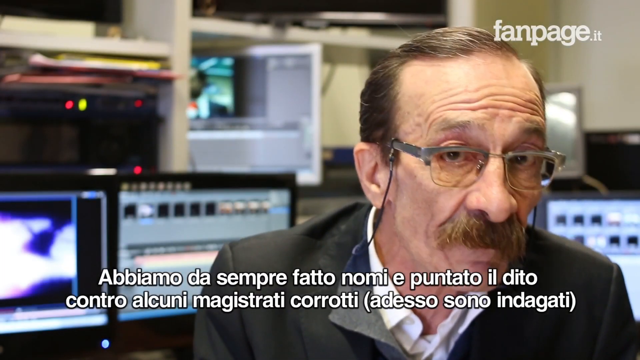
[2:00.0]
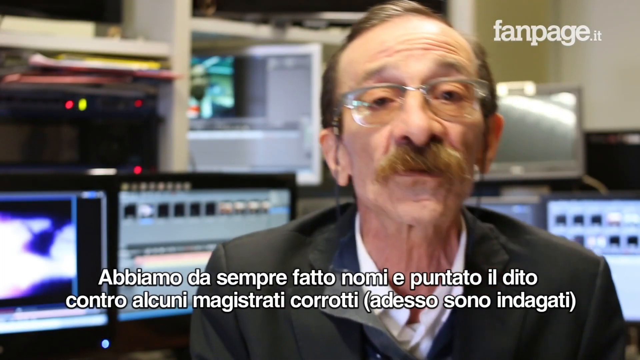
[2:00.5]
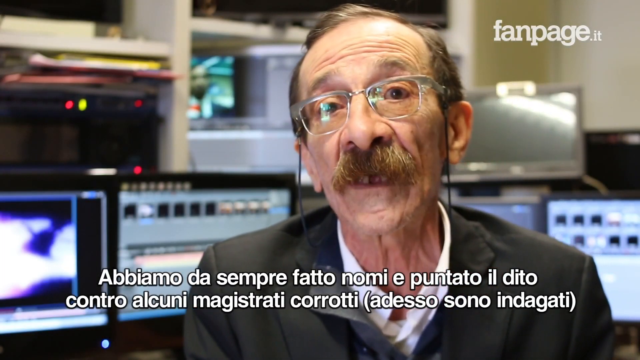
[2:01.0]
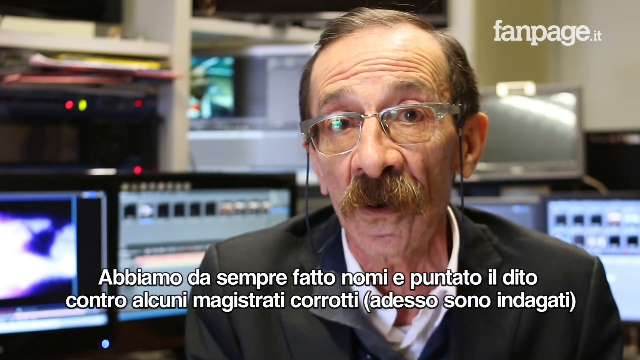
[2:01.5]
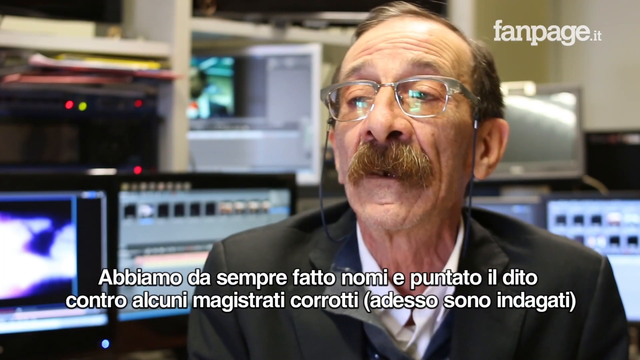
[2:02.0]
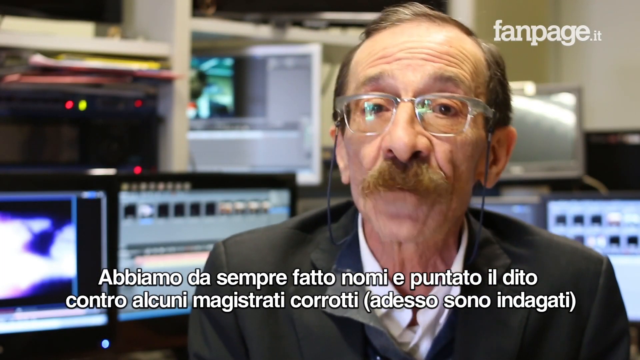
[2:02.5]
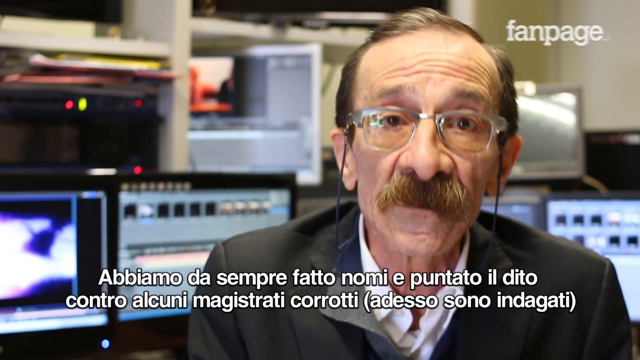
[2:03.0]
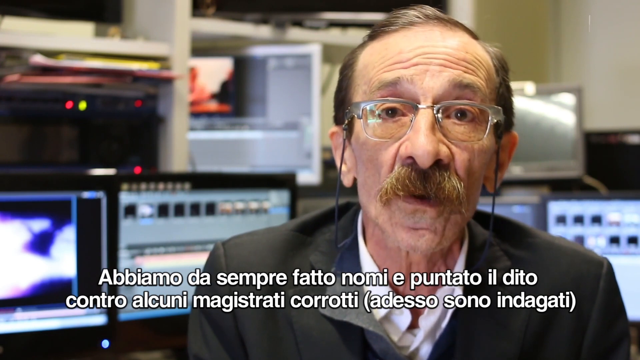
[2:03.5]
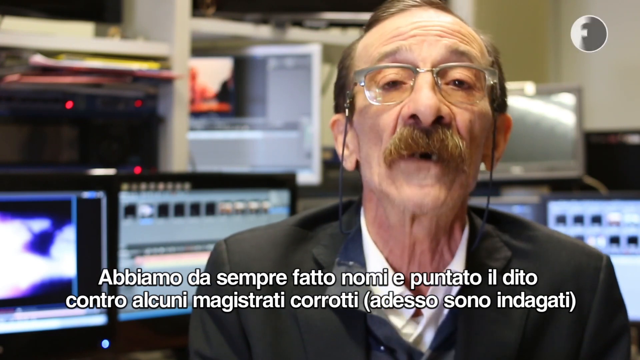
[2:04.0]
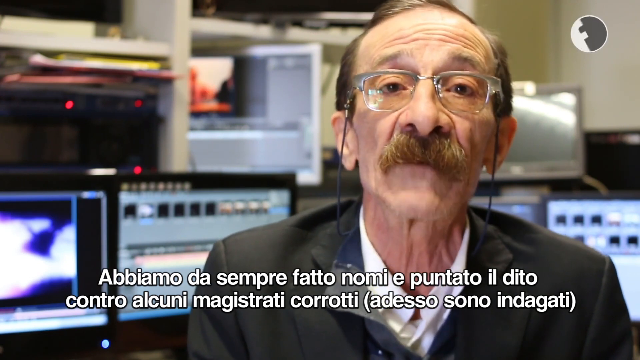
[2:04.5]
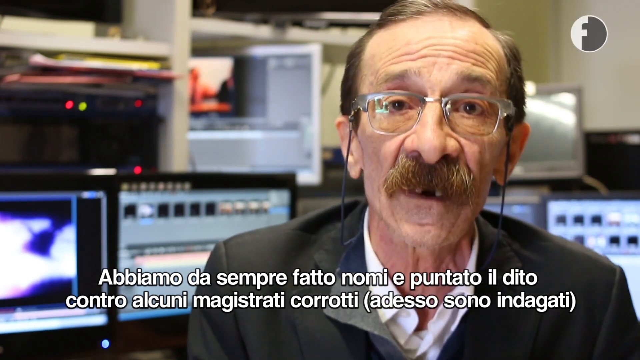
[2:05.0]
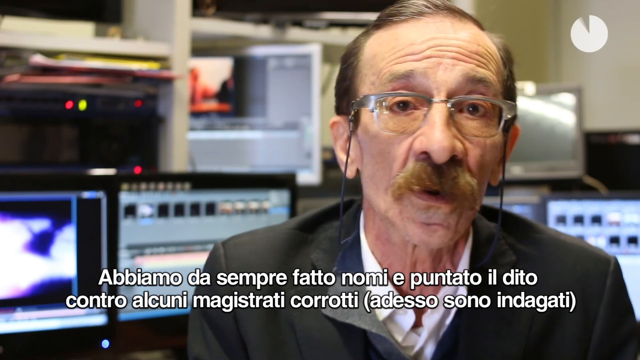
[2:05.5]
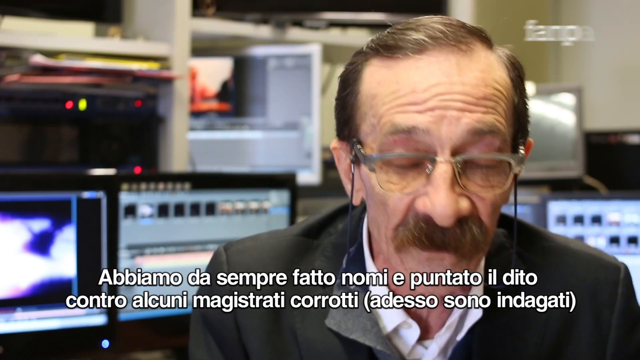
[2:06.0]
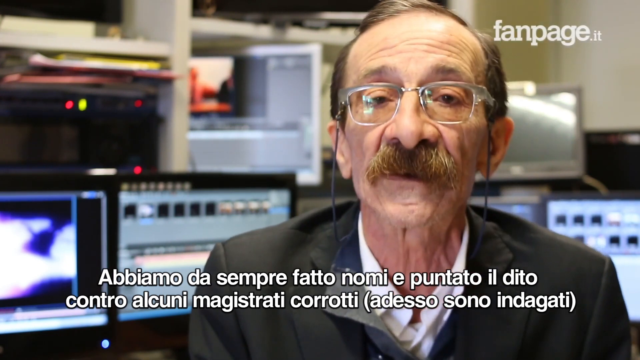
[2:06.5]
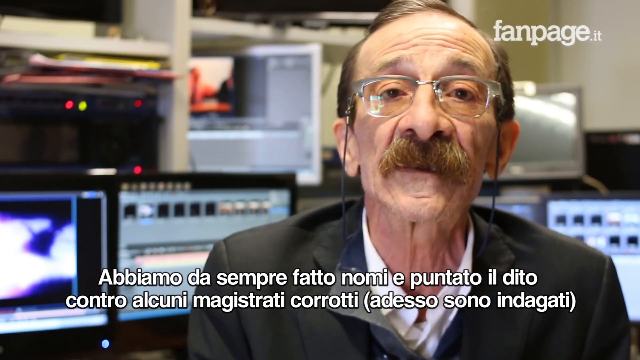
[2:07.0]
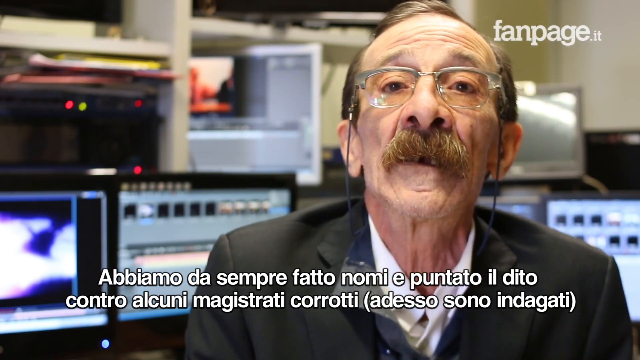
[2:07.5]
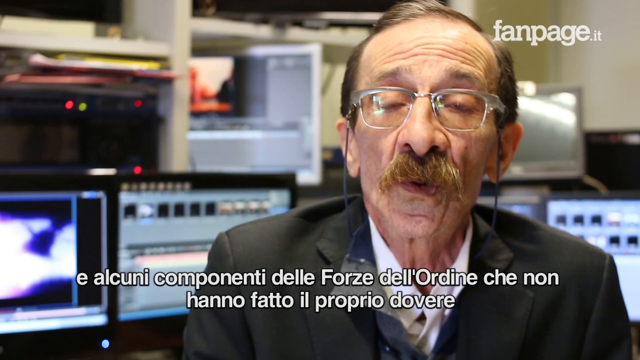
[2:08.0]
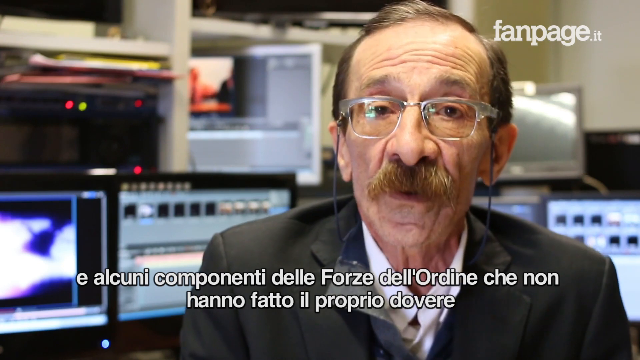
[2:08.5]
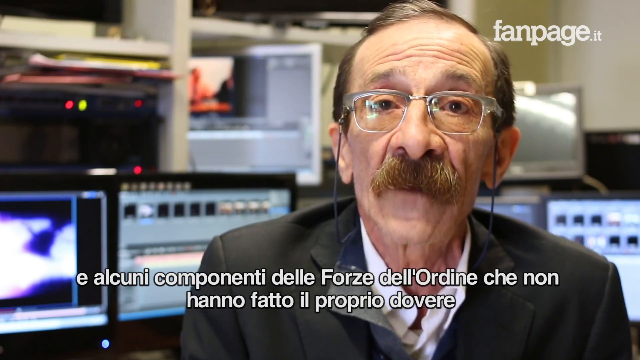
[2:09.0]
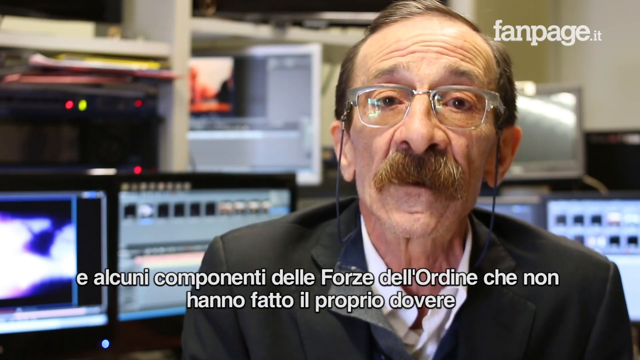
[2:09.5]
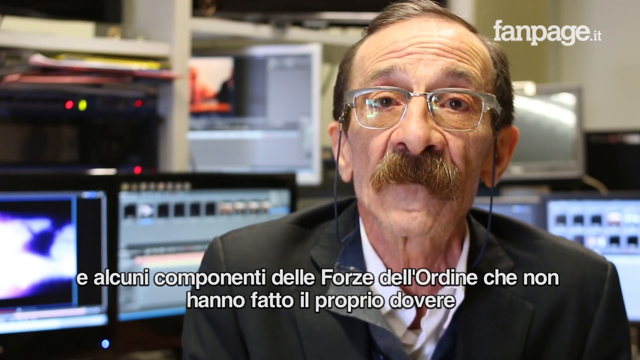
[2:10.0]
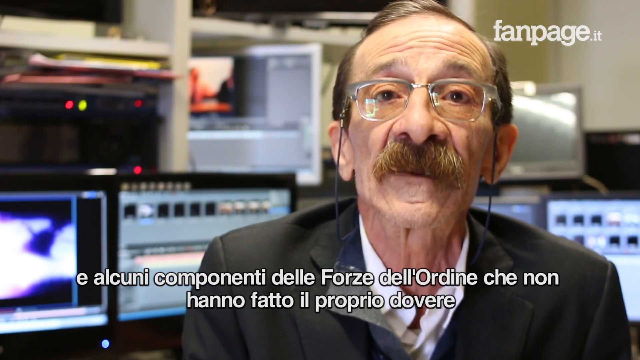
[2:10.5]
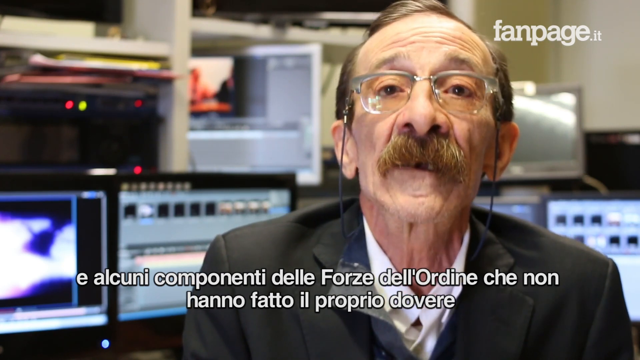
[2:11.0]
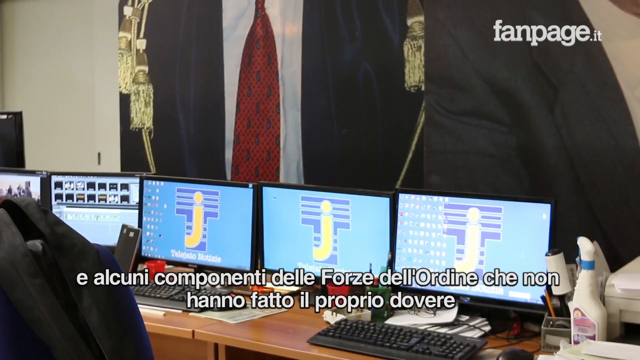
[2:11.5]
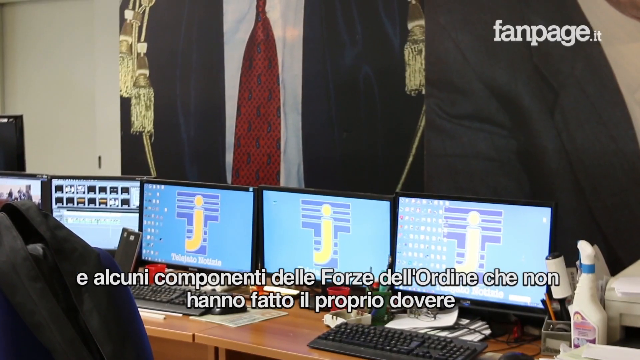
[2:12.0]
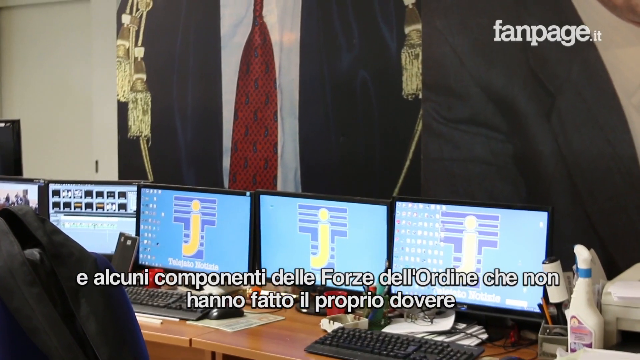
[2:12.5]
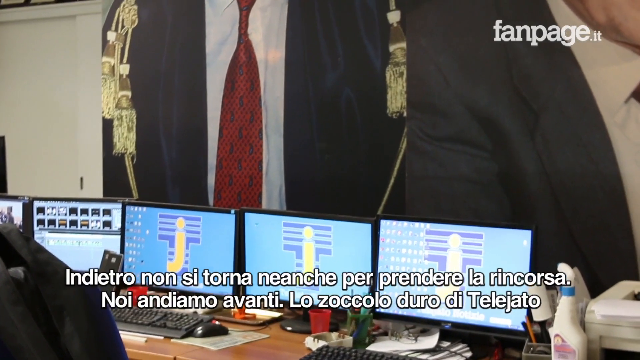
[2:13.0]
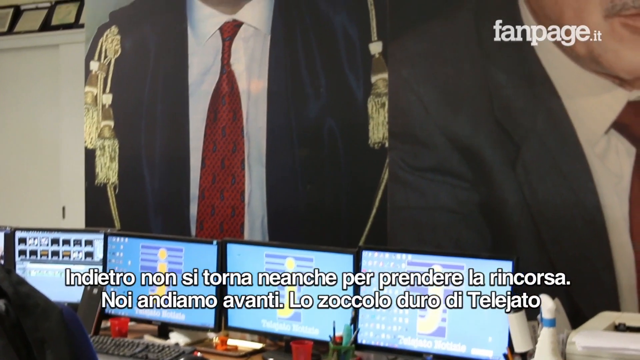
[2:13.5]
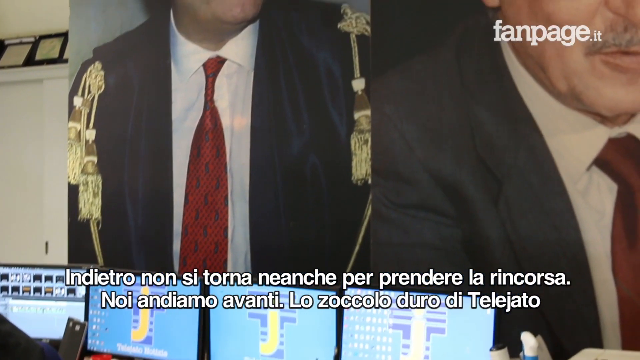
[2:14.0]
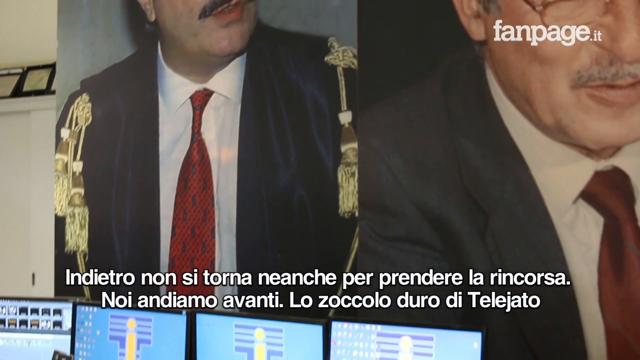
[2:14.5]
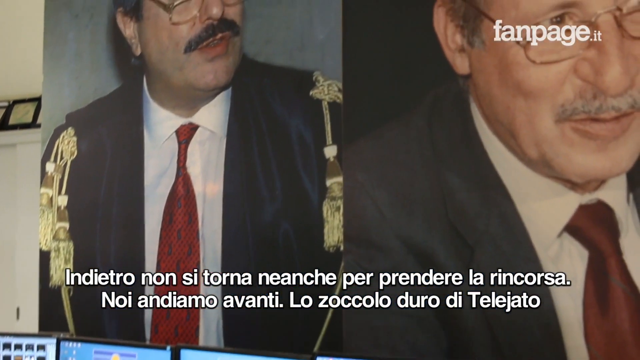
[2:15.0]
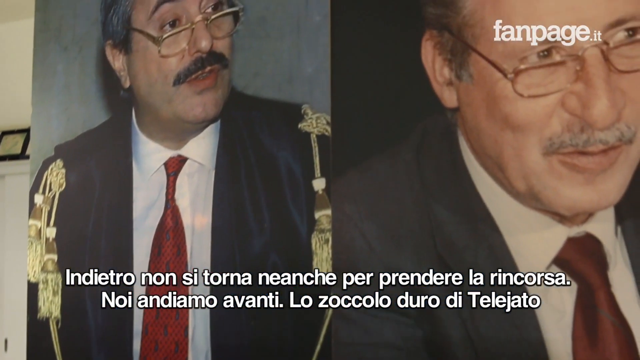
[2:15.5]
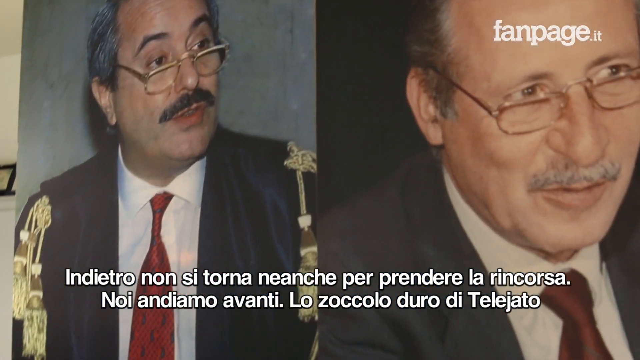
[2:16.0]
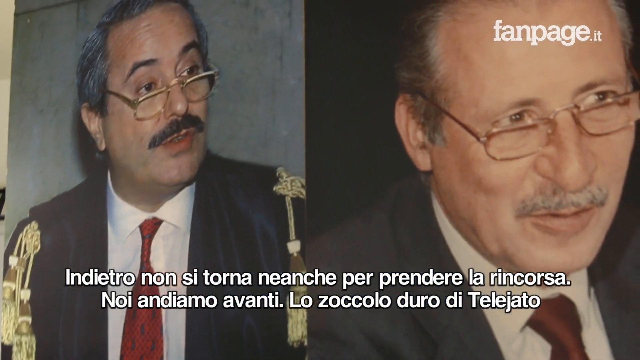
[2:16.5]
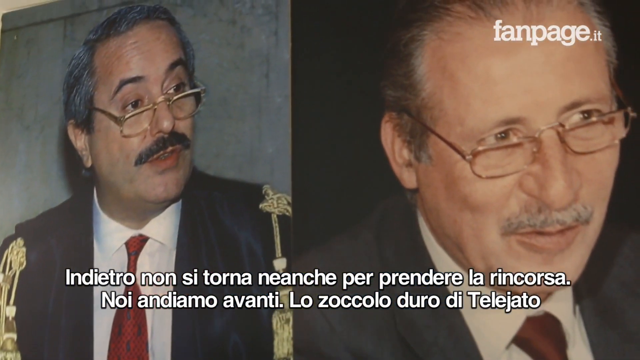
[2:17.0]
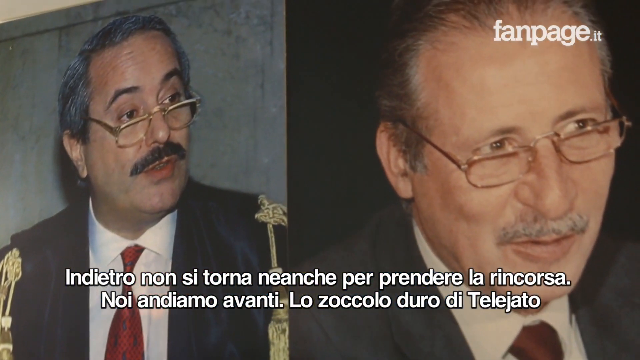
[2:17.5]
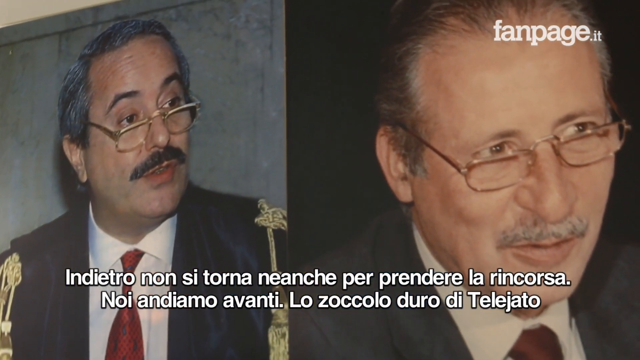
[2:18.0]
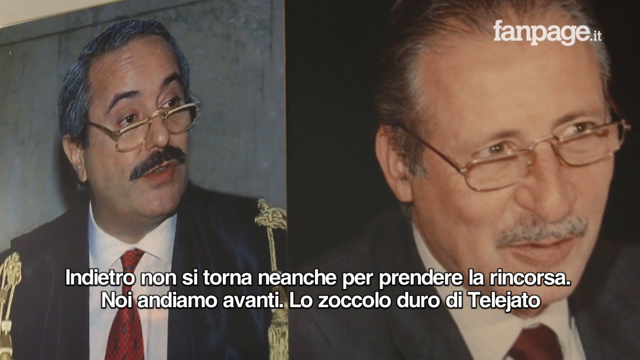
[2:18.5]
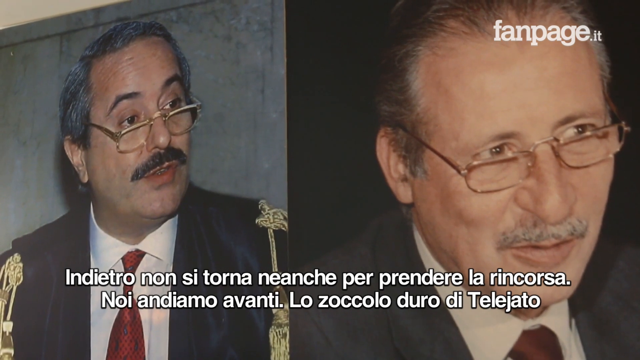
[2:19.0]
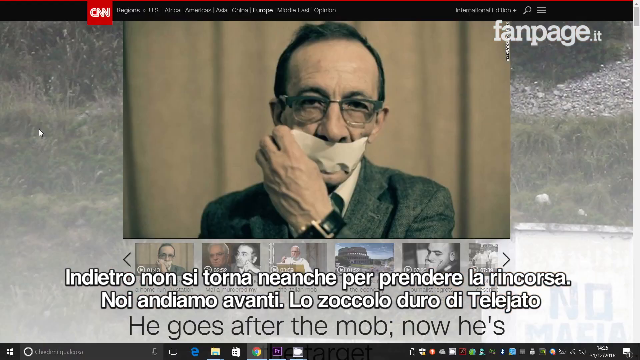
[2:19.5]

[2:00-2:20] The man with a receding hairline, glasses, a distinctive moustache and a clean-shaven face talks passionately into the camera, making eye contact with it. At first his head is directed forward to his left, then he moves himself back and looks into the middle, sort of nodding and tilting his head to emphasise his point. The next shot shows old photos of a different man in a suit, with more grey in his hair and a larger, heavier build, who also has glasses and quite a distinctive moustache. It looks to be the same man in two photos: on the left he looks younger, and on the right he looks older, with greyer hair and eyebrows. The man who was talking into the camera is then shown again briefly on the CNN news page, with a piece of white paper or tape across his mouth and his left hand held up across his body as if he is removing the tape.